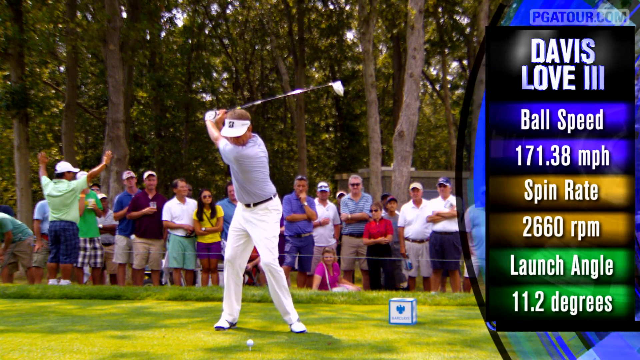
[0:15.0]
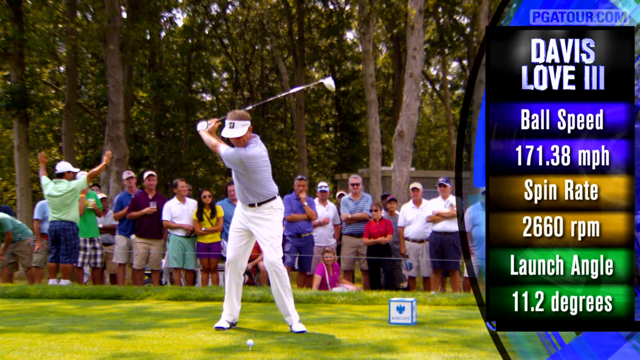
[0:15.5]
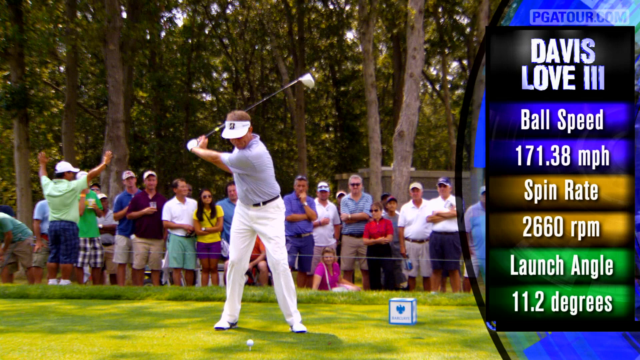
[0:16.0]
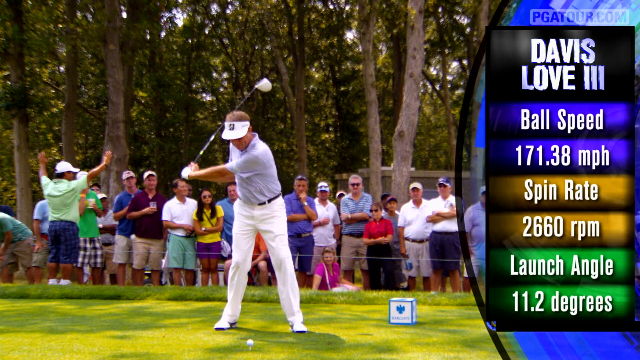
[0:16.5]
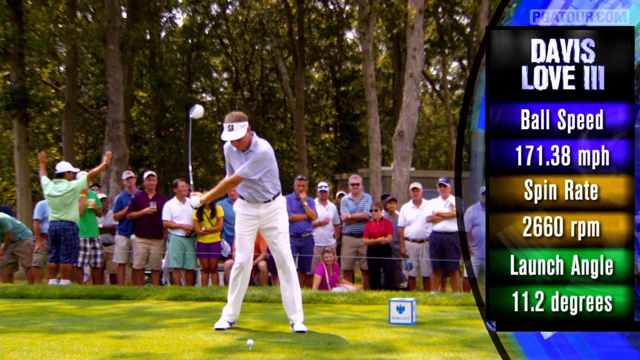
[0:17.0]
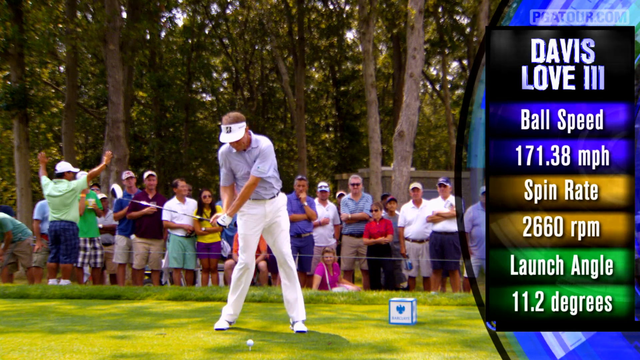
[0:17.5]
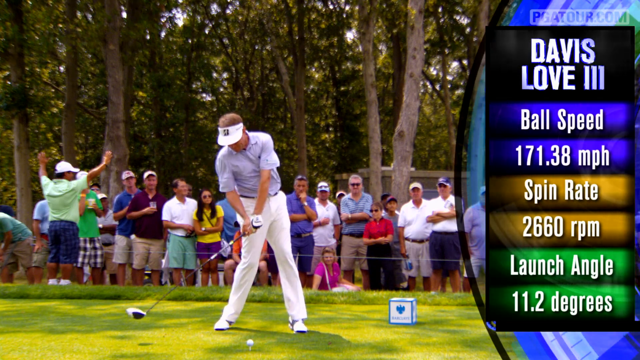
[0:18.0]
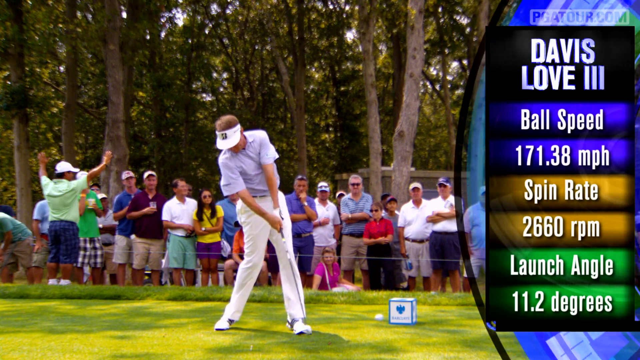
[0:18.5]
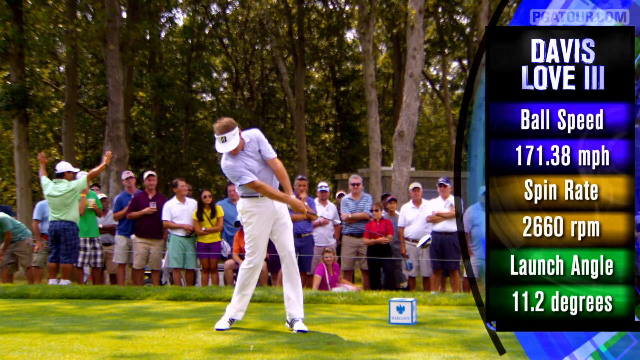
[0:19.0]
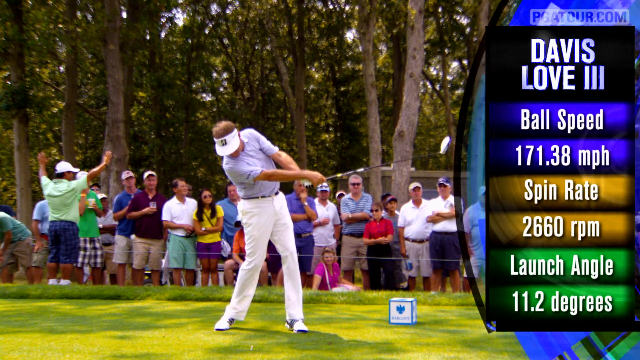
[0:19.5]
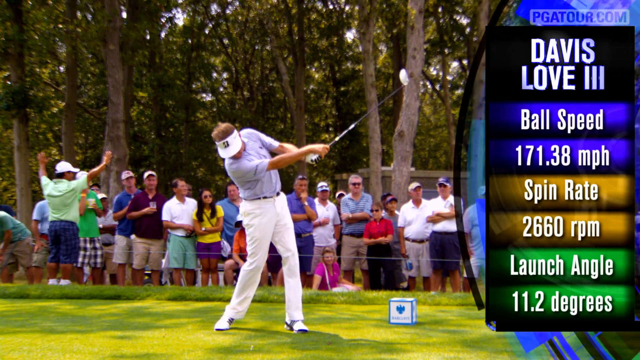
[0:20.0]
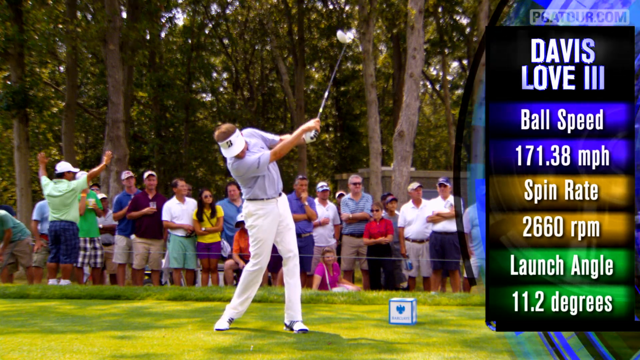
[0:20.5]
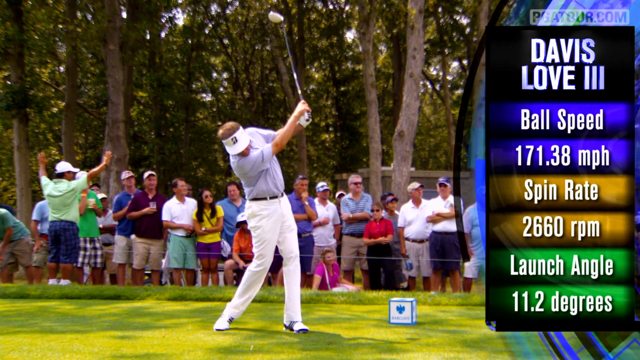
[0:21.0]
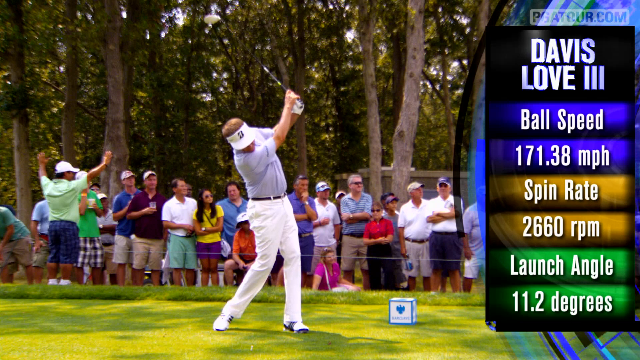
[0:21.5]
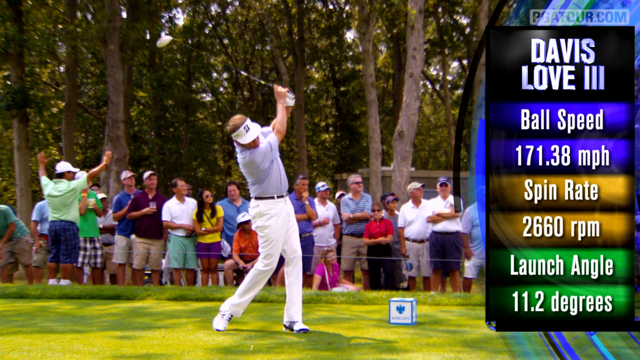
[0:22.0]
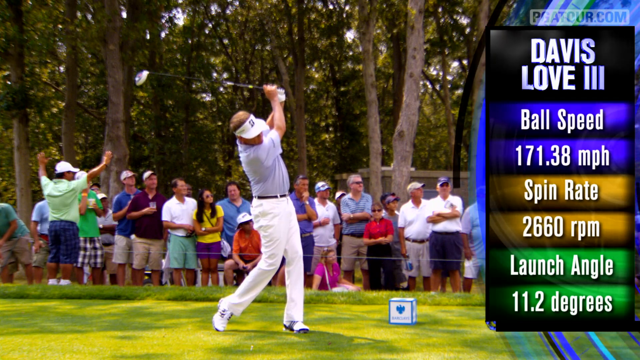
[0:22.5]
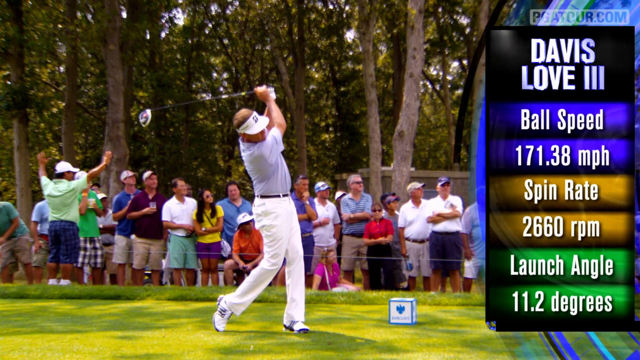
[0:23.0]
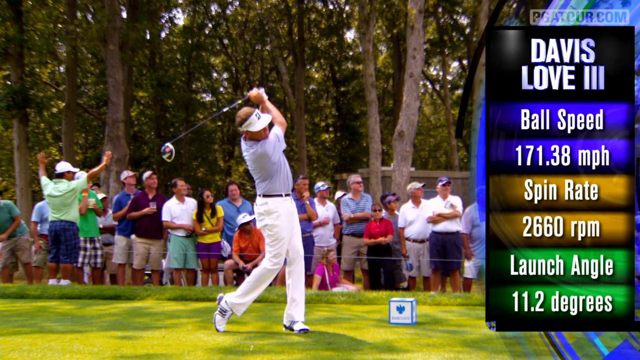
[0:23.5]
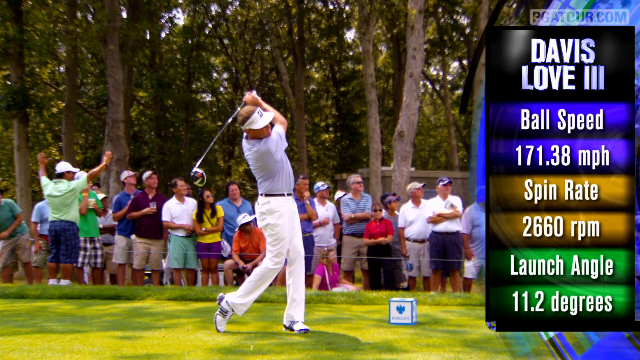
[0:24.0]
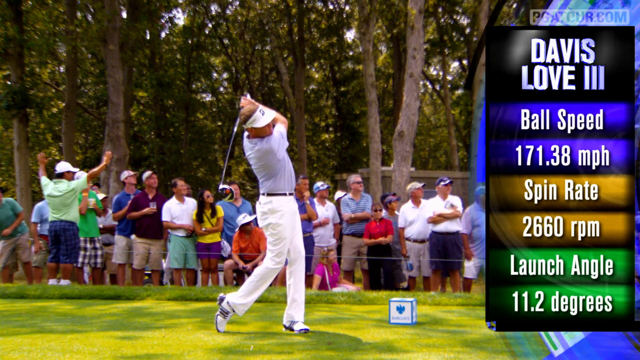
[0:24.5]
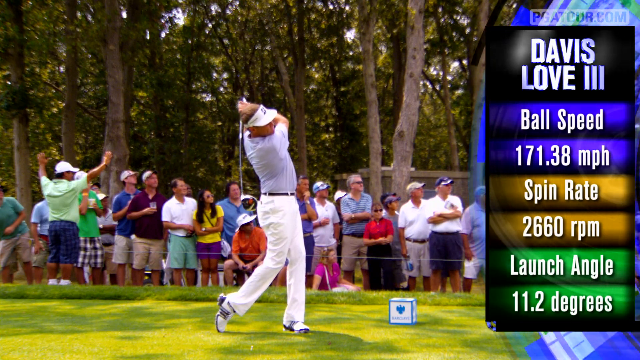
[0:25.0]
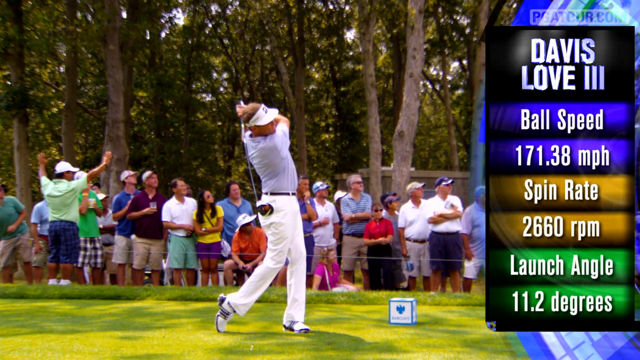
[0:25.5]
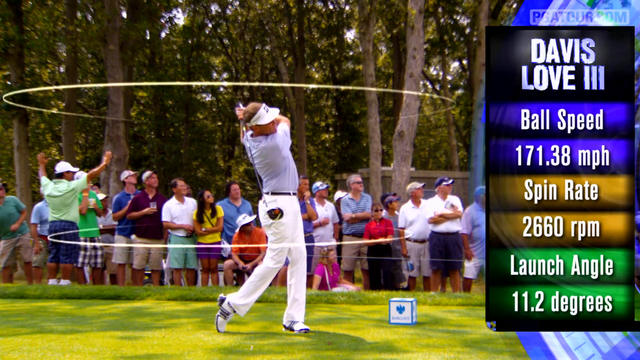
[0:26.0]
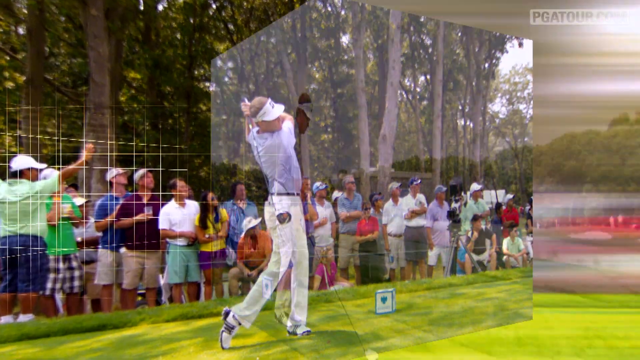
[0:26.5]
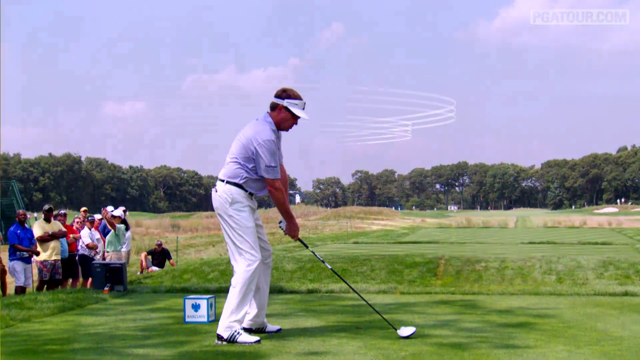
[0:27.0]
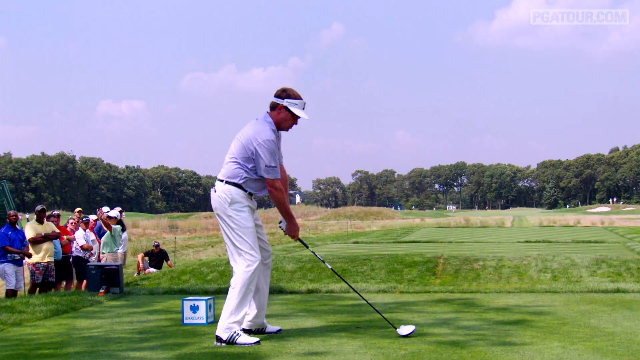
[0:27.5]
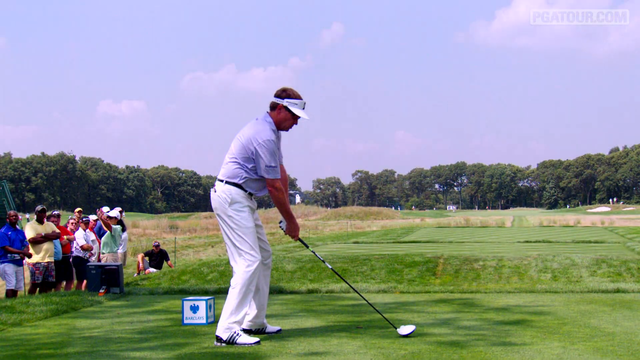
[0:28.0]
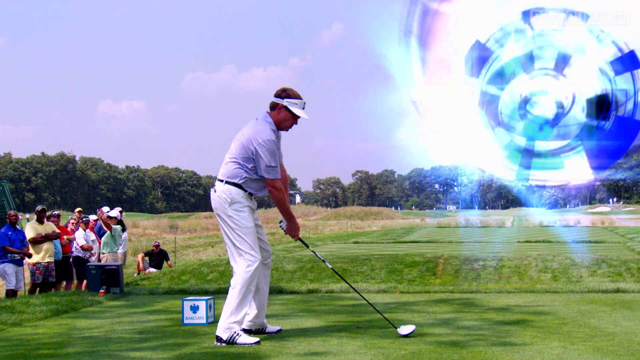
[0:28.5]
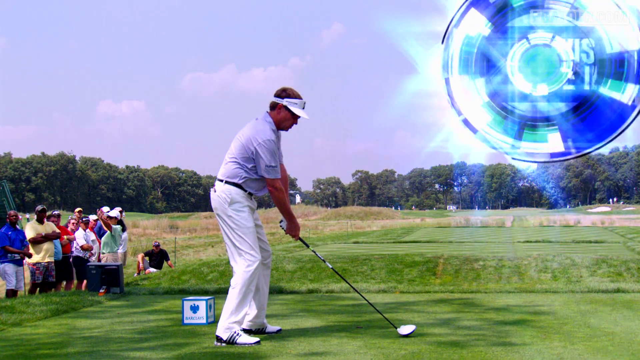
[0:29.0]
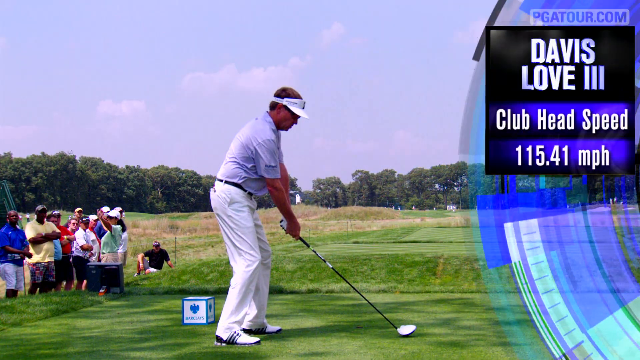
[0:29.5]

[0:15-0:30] The golfer swings, still in slow motion but not as slow as when he brought his driver back. His stroke is very smooth and he hits the ball very hard, then brings the driver around his back and looks to see where the ball went. The video then switches from the side camera angle to one from behind him as he hits the ball. From this angle, audience members, mostly older men, are visible to his left. Far in the background, in front of him, are trees and a grassy golf course, with some dead-looking grass on the left side.